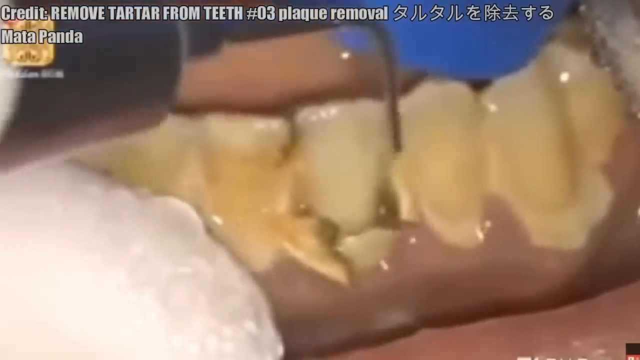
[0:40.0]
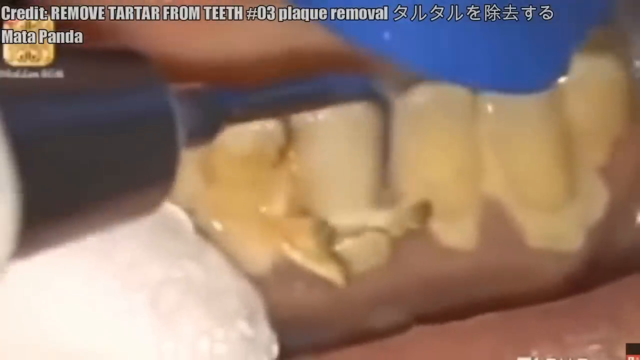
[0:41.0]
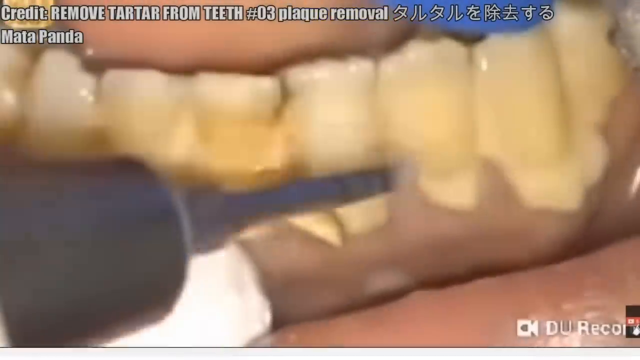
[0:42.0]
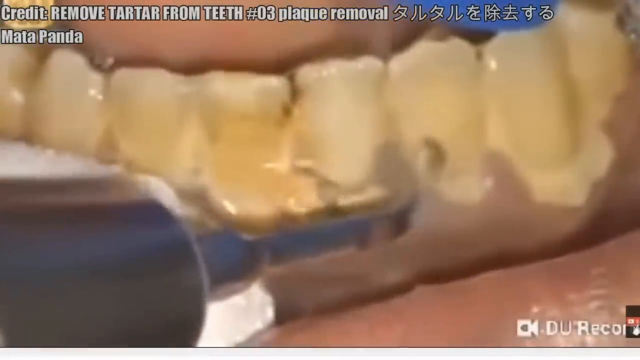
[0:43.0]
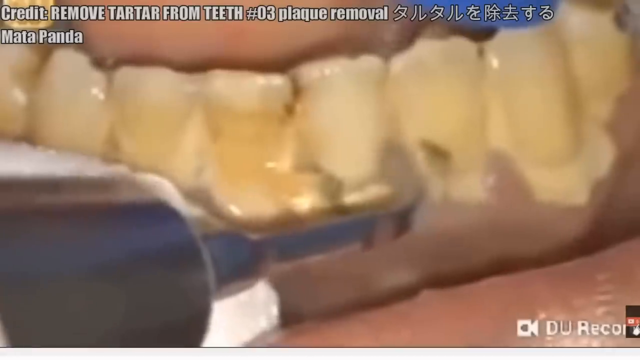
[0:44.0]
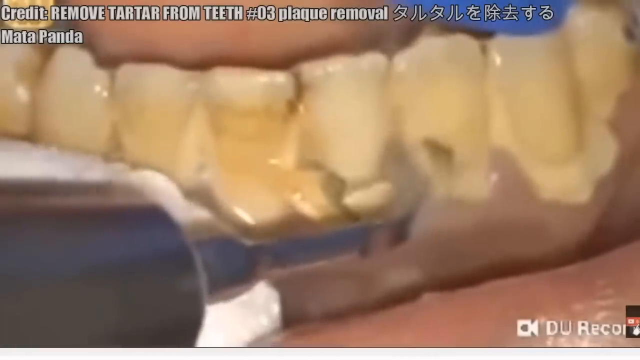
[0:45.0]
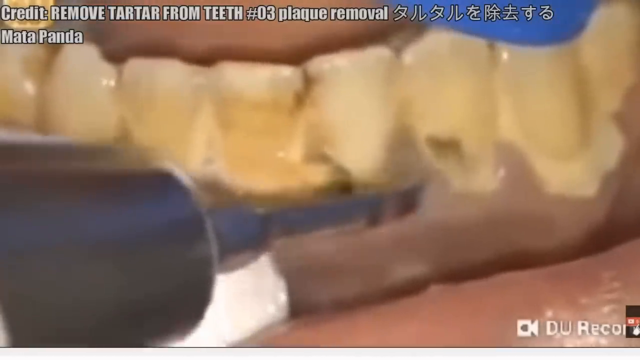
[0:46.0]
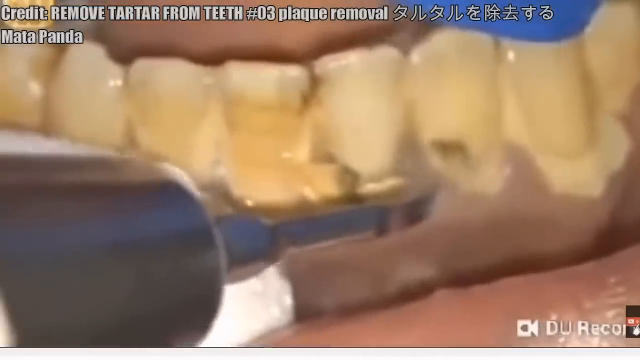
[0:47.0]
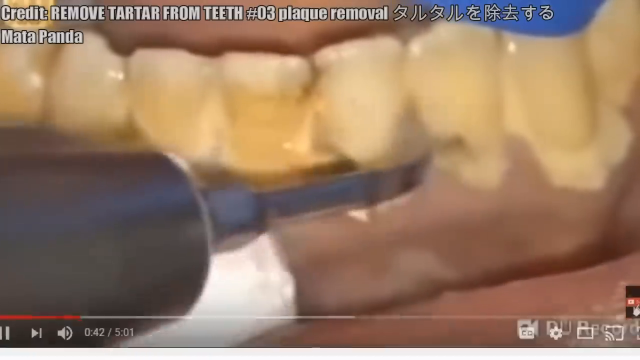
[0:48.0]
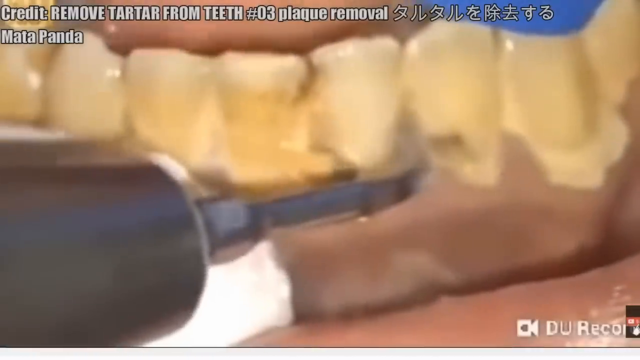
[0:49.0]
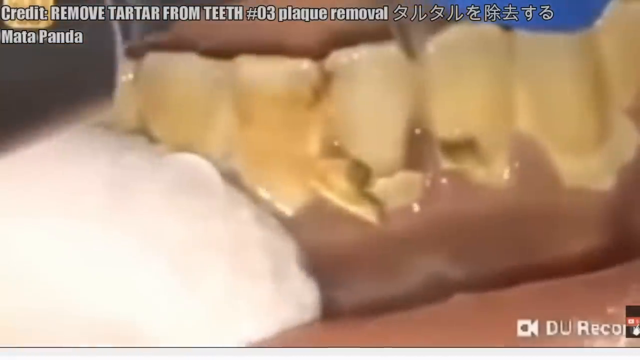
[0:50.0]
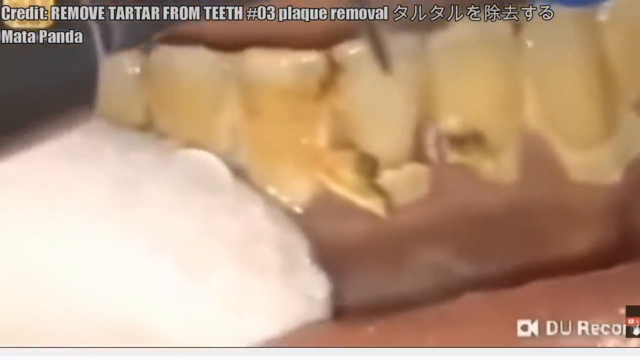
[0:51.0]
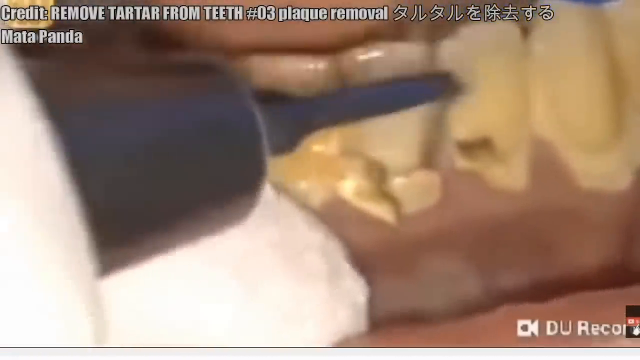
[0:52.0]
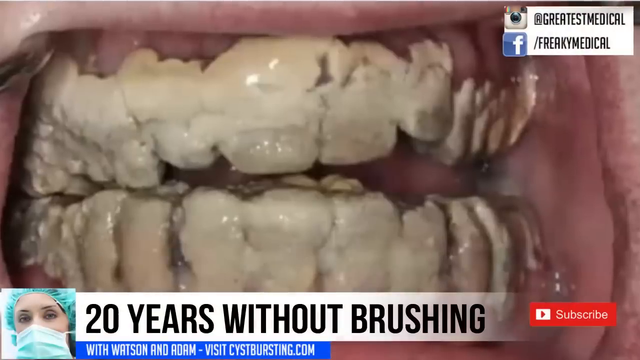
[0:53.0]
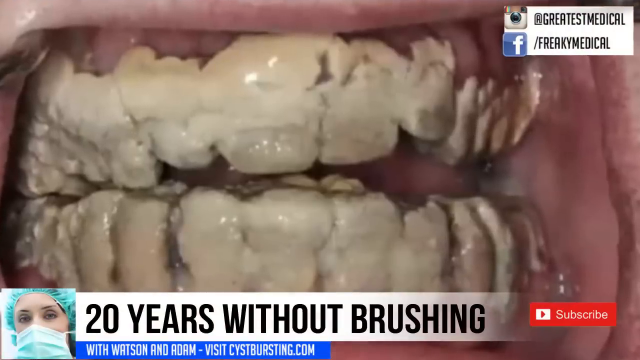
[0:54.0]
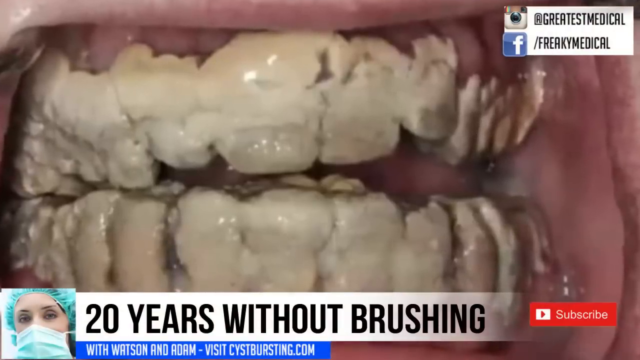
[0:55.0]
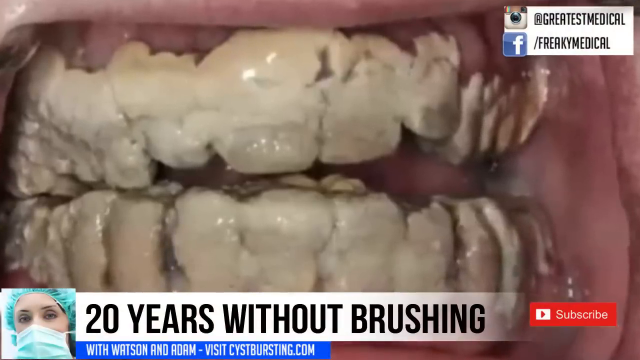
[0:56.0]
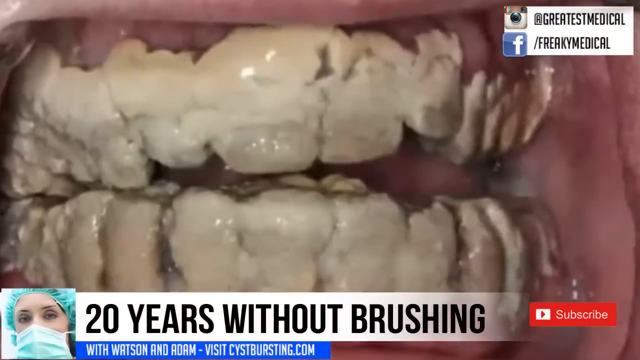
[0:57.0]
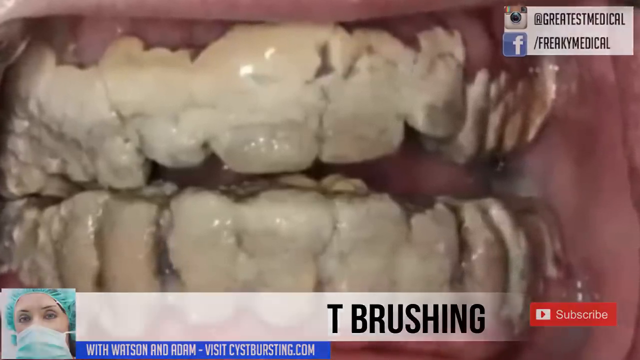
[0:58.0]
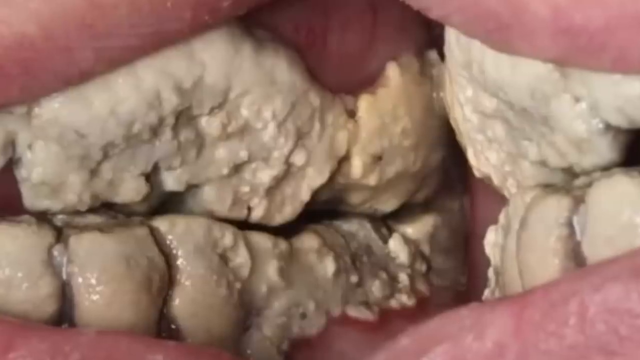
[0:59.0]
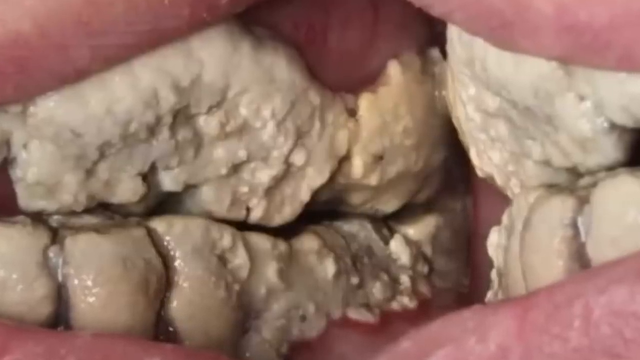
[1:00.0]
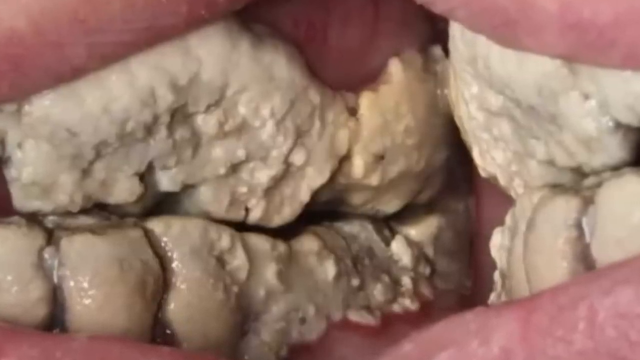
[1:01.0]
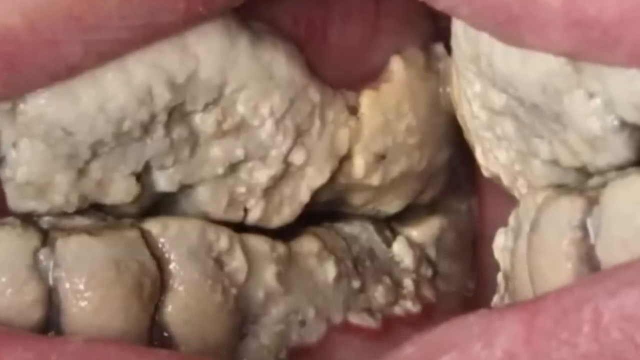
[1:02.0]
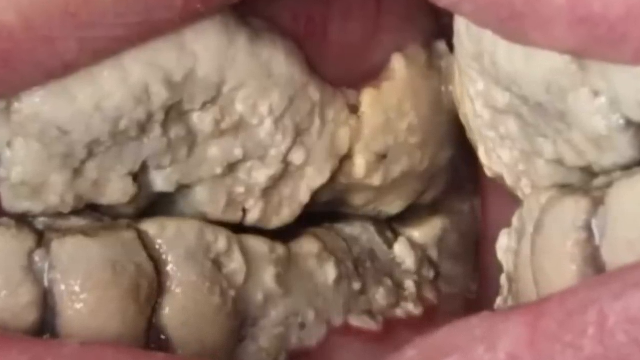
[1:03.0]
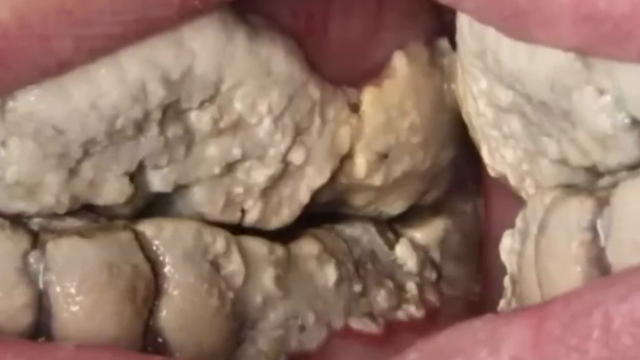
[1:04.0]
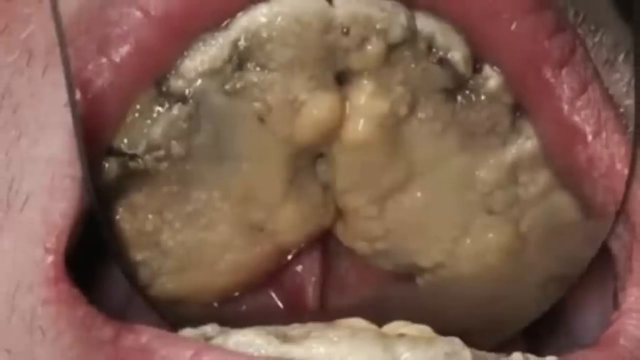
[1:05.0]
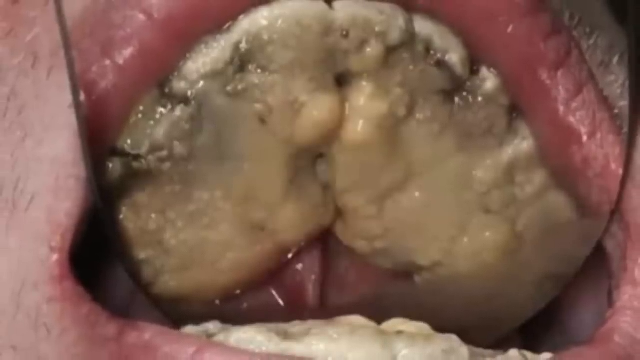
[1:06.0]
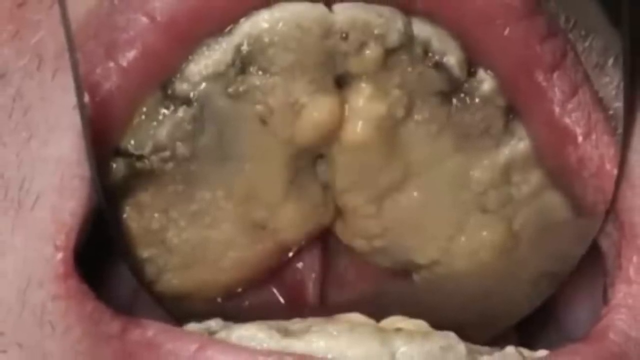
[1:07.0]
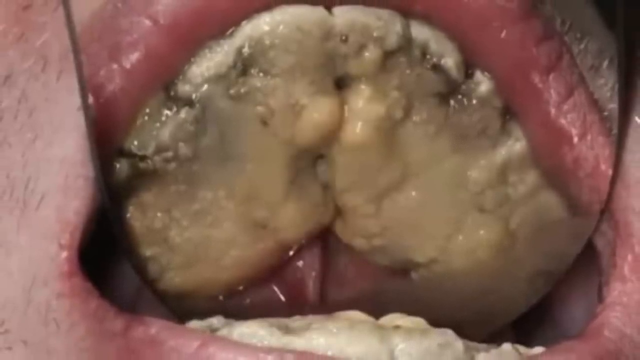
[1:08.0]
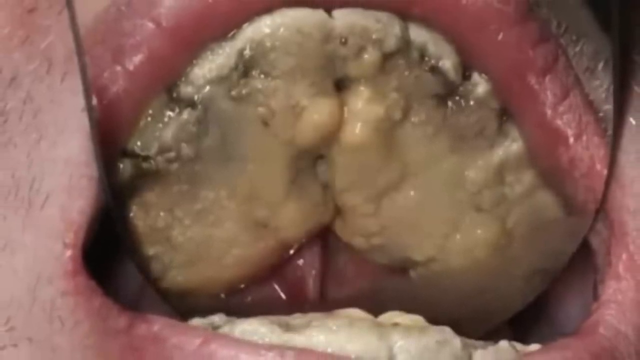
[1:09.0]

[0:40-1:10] Another tartar removal is shown, with a credit at the top of the screen reading "Remove Tartar from Teeth. Number 03, Plaque Removal, Mata Panda." A large black pick goes in between the teeth, and large scales of tartar fall away. Dark black plaque is visible between and on top of the teeth. The earlier image of large tartar plaques on a person's teeth appears again; it is the worst case shown by far, with the tartar completely encasing the teeth so that the gaps between them cannot be seen. A new caption underneath reads "20 years without brushing." Another image shows a person's teeth with a similar amount of black and tartar on them, but this tartar has a rough, jagged surface.